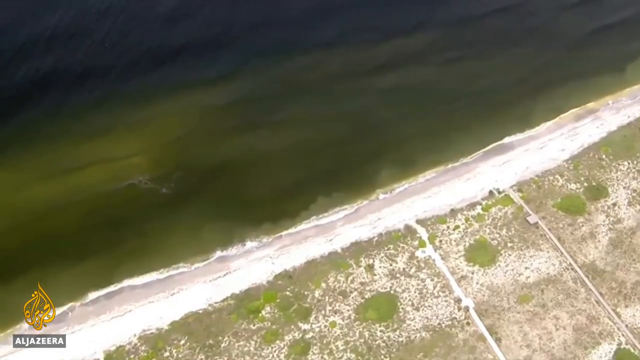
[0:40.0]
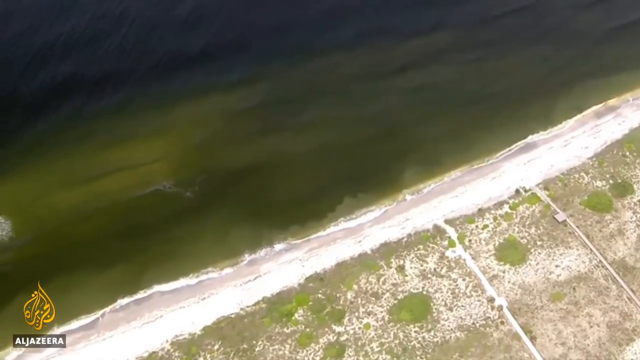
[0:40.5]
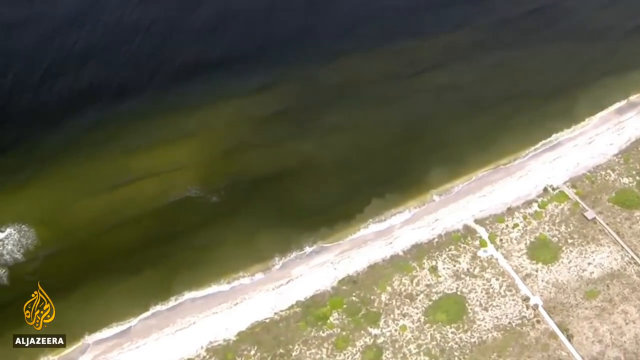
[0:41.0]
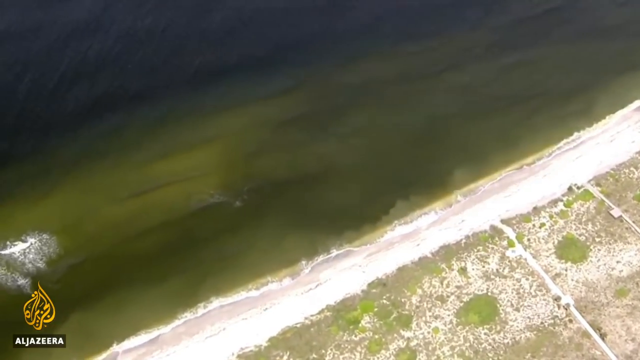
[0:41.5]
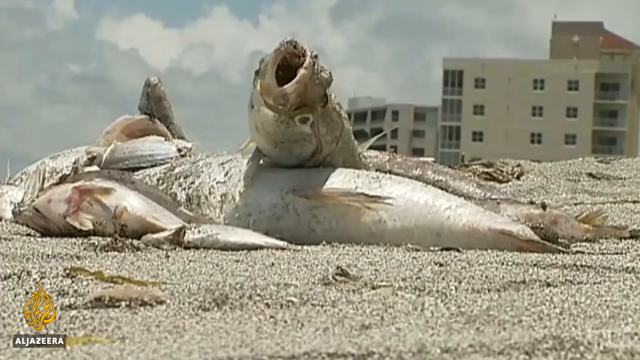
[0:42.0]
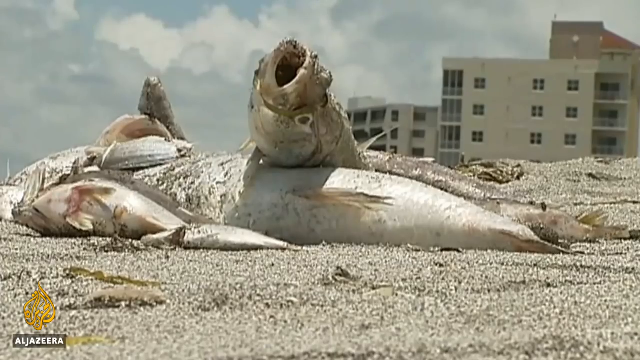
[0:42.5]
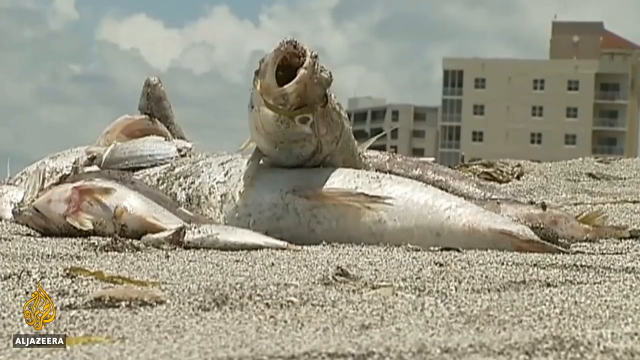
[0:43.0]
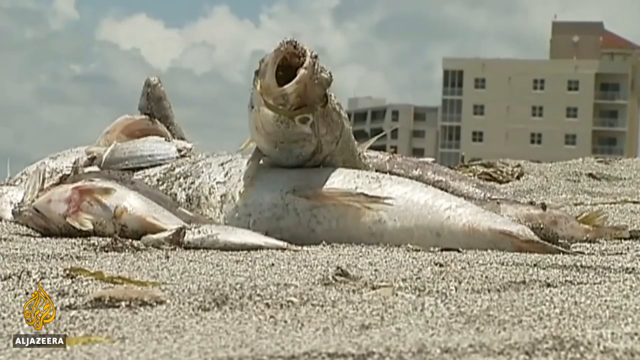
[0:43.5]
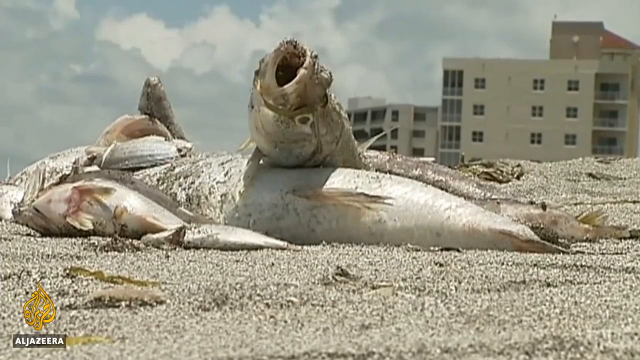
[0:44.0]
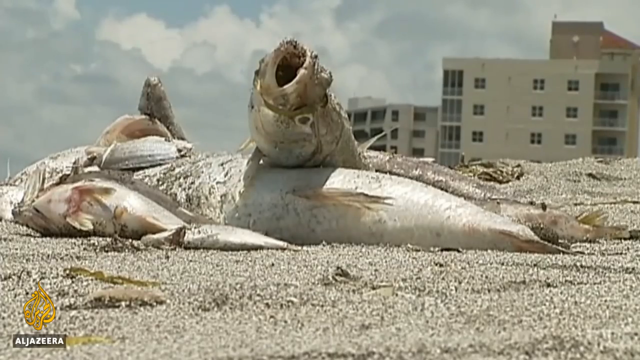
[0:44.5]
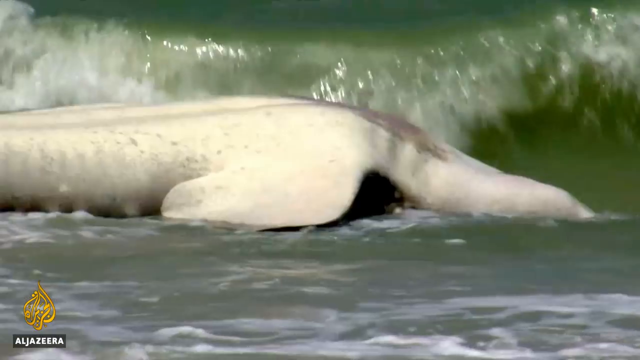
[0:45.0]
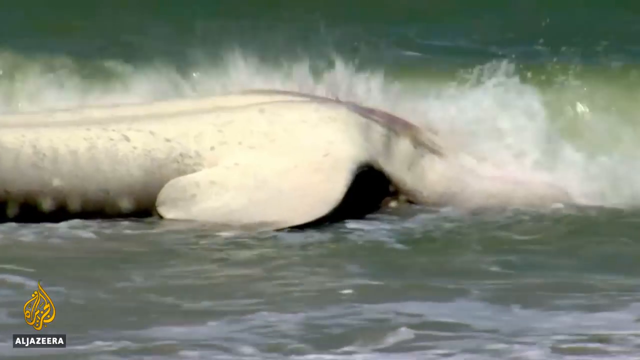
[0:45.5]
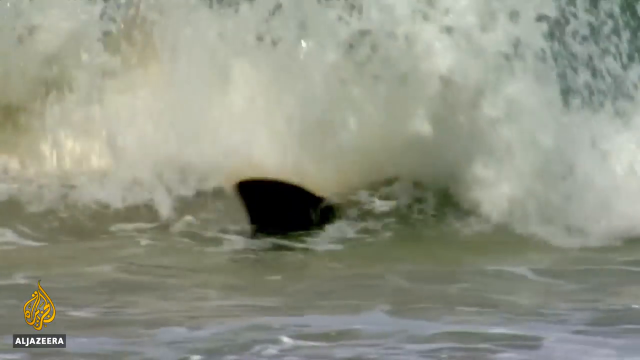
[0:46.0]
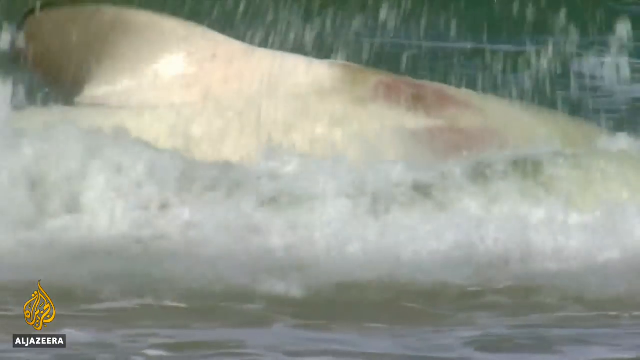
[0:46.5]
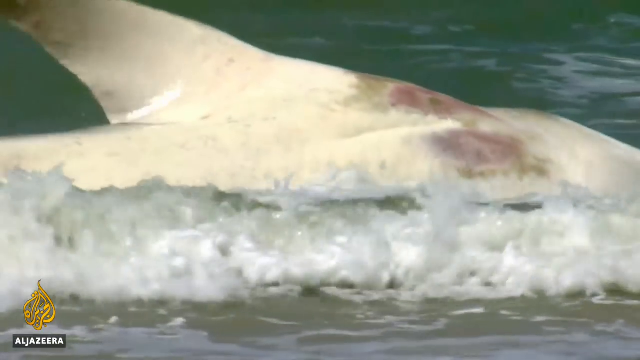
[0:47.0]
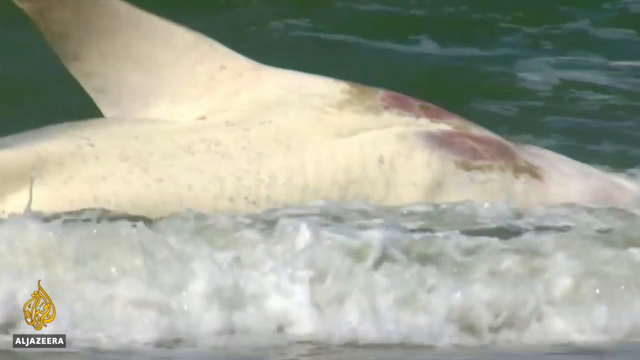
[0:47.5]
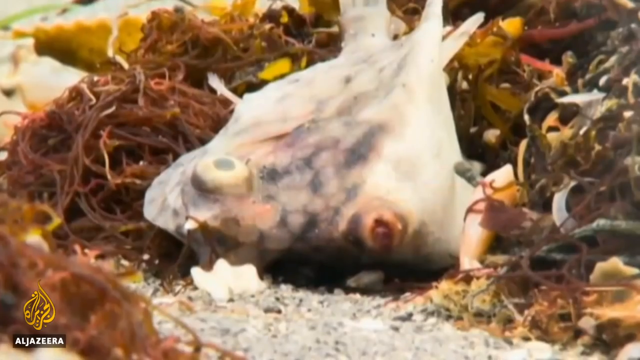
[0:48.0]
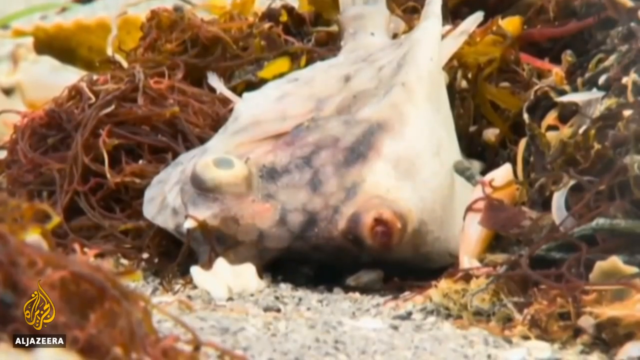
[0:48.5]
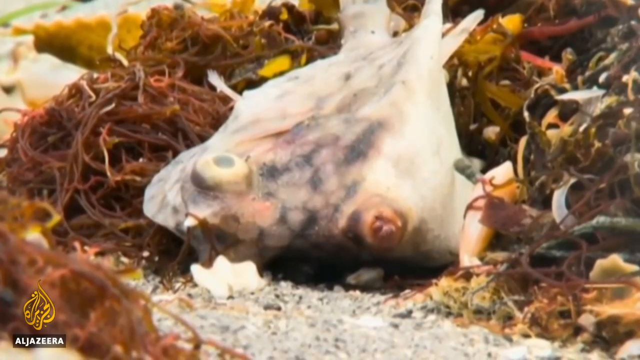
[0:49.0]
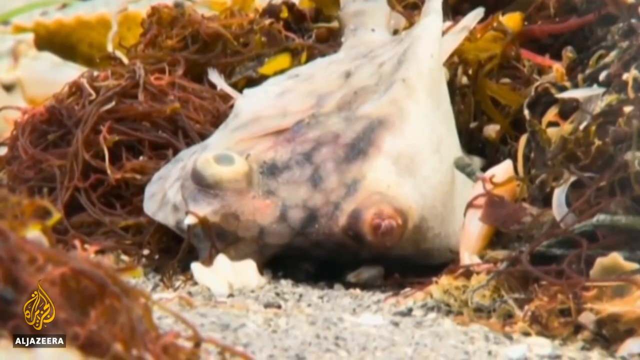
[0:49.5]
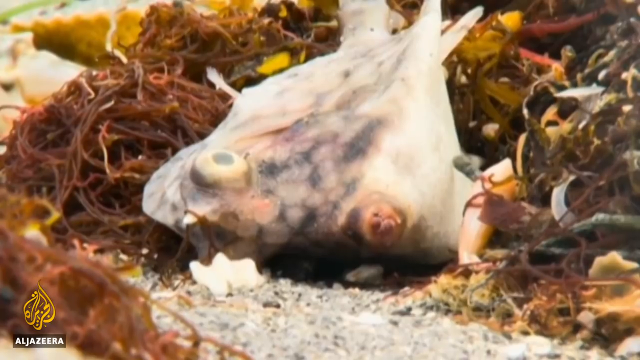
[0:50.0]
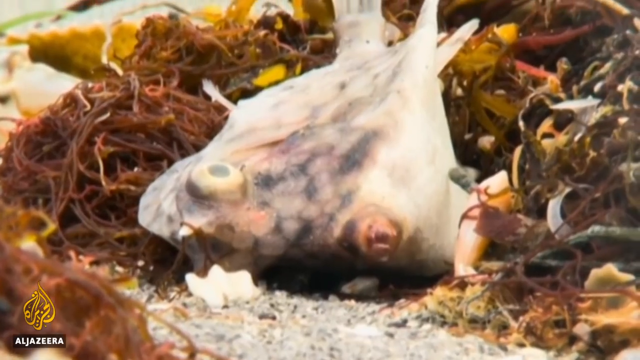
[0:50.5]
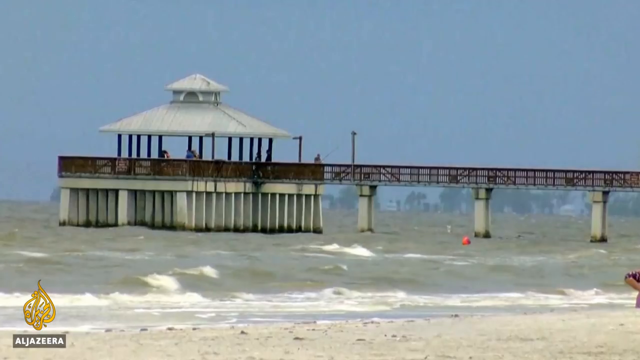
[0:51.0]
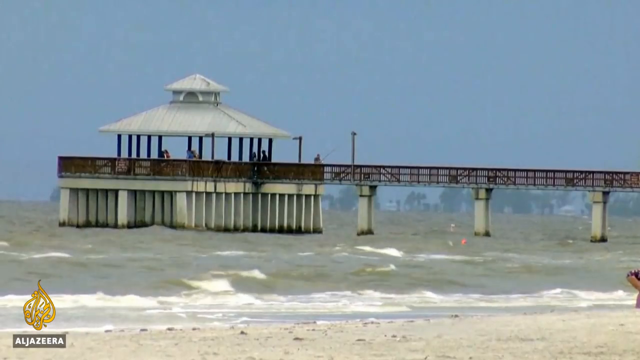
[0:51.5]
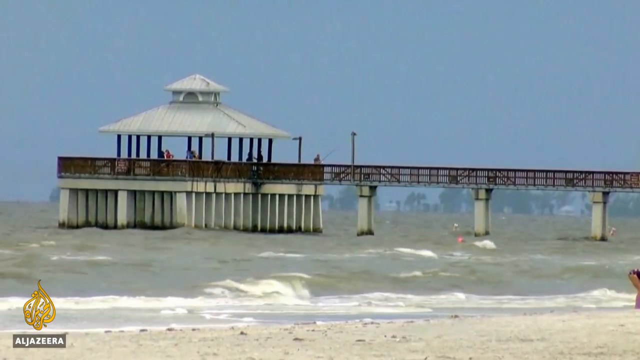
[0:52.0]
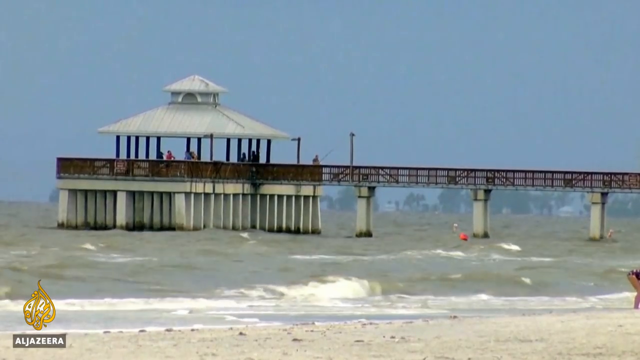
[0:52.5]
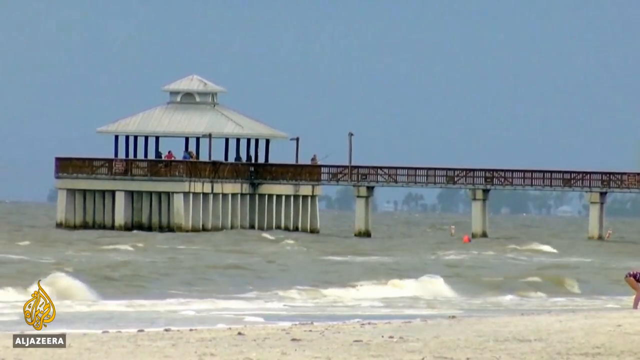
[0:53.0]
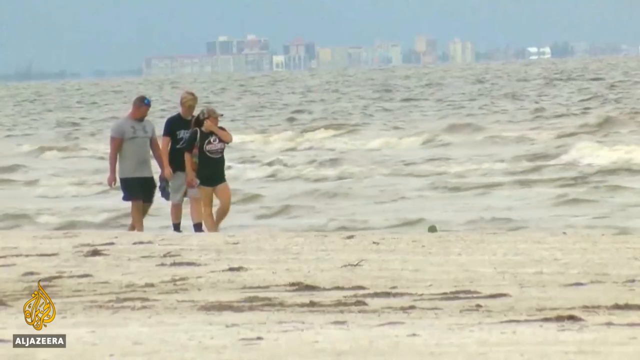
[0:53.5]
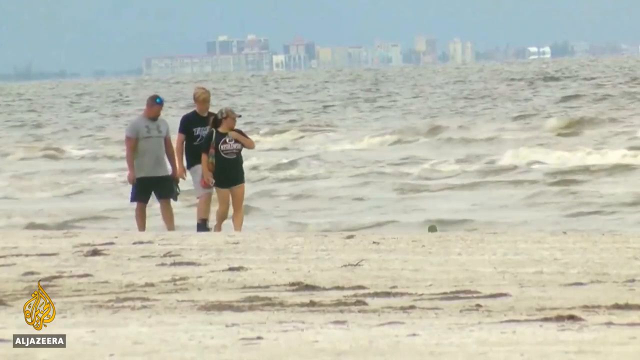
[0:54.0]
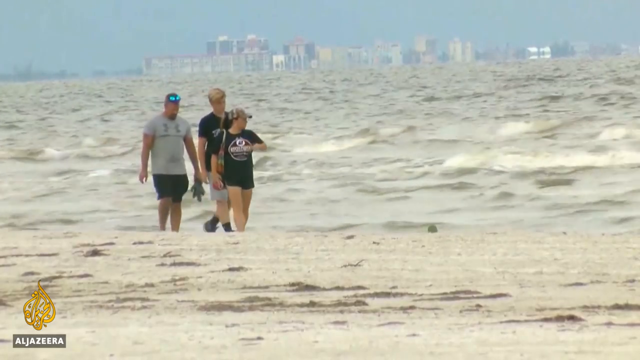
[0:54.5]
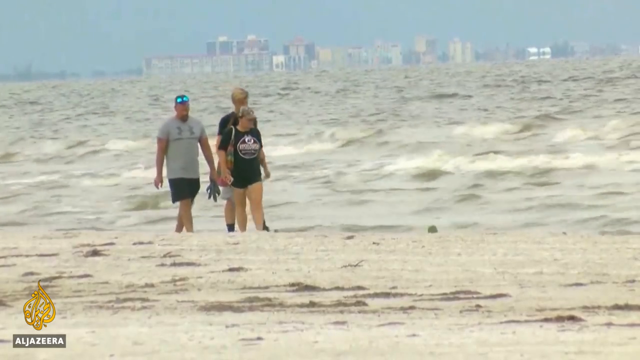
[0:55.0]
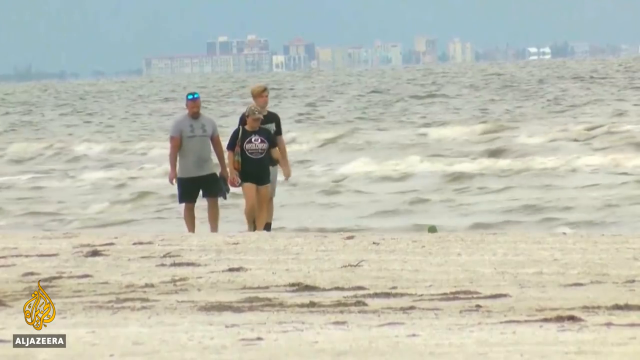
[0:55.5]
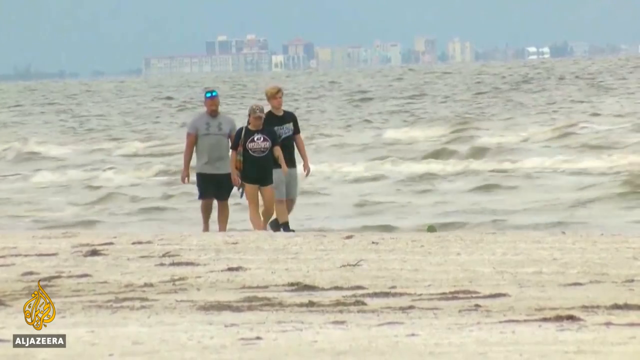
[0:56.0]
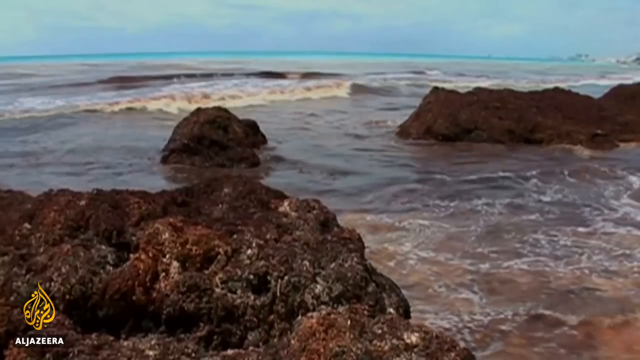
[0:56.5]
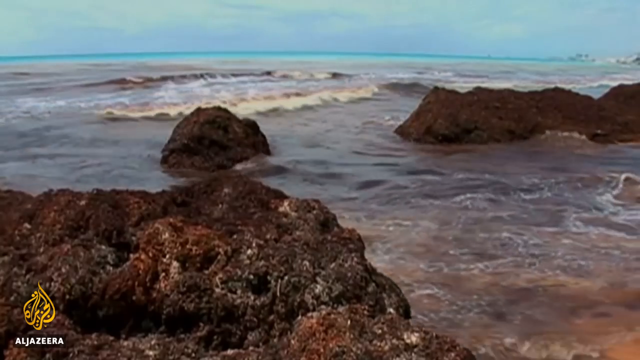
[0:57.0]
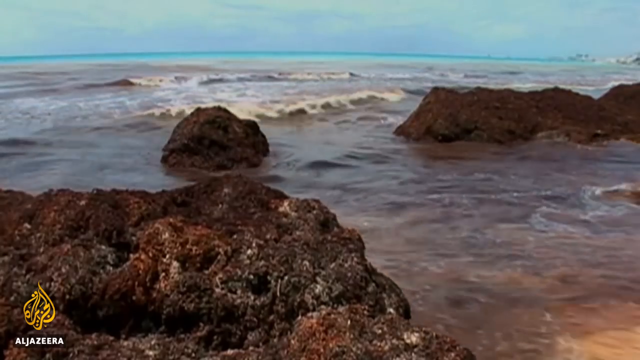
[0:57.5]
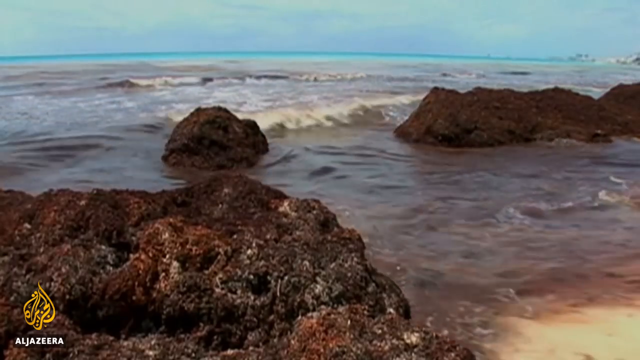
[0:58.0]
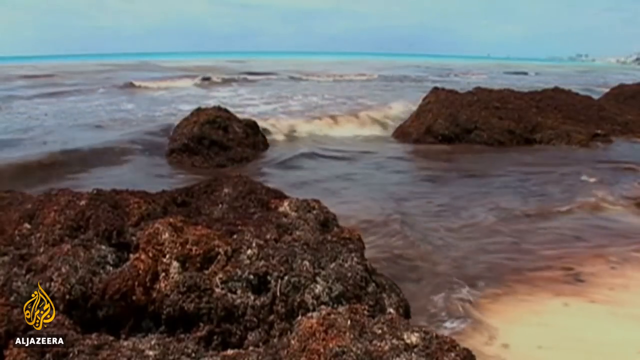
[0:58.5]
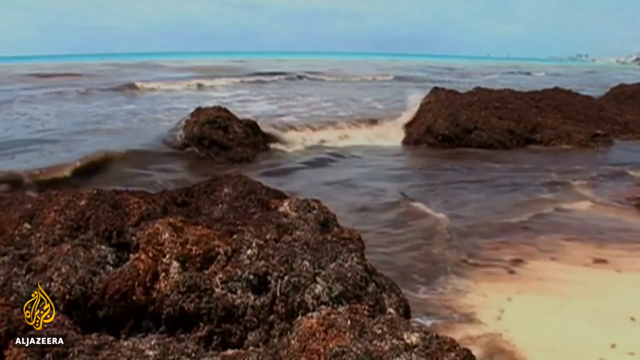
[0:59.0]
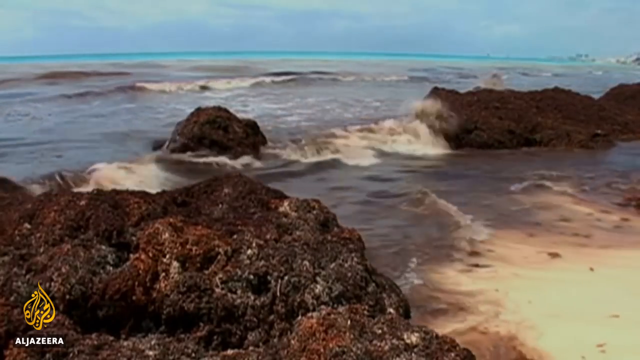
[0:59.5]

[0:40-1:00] The beachfront property is seen with the water in the upper portion of the frame, reaching about three quarters of the way down on the left and about a quarter of the way down on the right. A green algae plume is visible in the water as the view moves down the beach, shifting somewhat to the right. The video cuts to dead fish washed up on the beach, apparently four or five clumped together, with condos or townhouses in the background, including what looks like a four- or five-story white building. The shot holds on the fish. Another dead fish, or maybe a shark, washes up on the shore, and another type of fish lies dead in the algae. Next is a beach pier with a marina-like structure at the end, its white piers starting to rust underneath, with a handful of indistinct people on it. The video cuts to extremely choppy water with the beach at the bottom right, where people walk from left to right. A woman plays with her hair with her right hand, two people are dressed almost alike in t-shirts of the same color, and a man is next to the woman in the back. Tall buildings stand across the choppy water in the center background. Finally, waves wash up on rocks in very dirty-looking water.